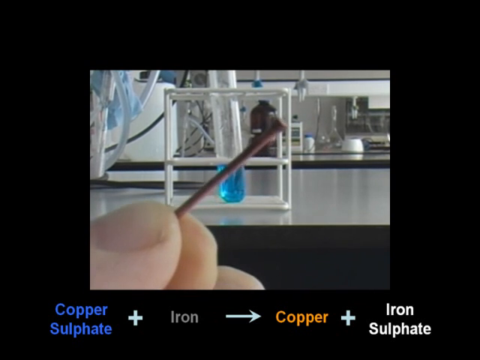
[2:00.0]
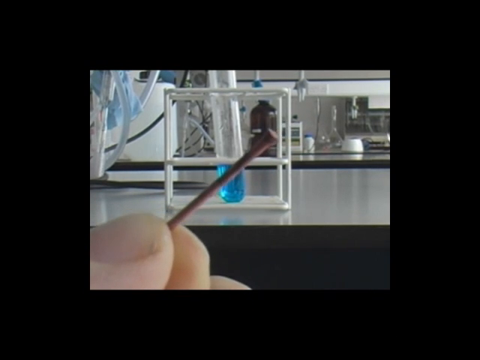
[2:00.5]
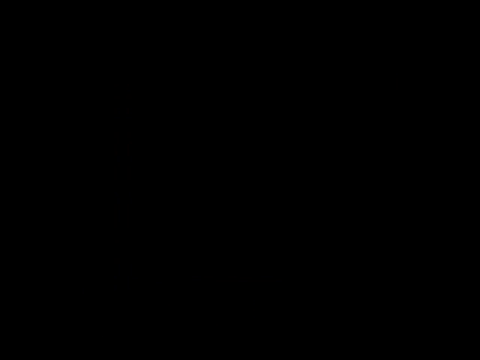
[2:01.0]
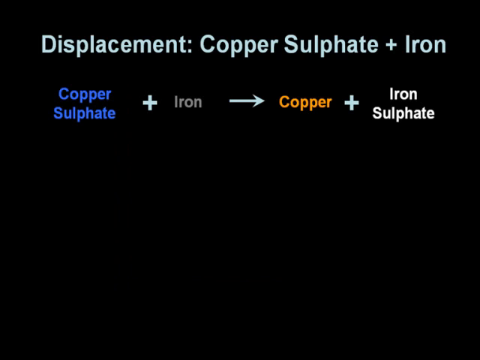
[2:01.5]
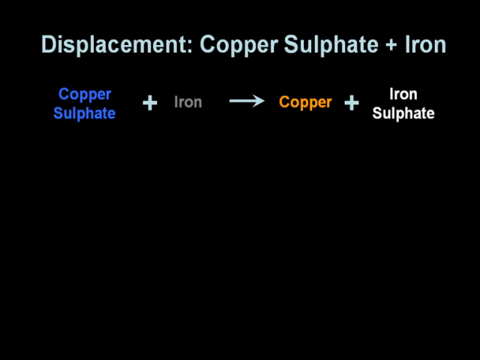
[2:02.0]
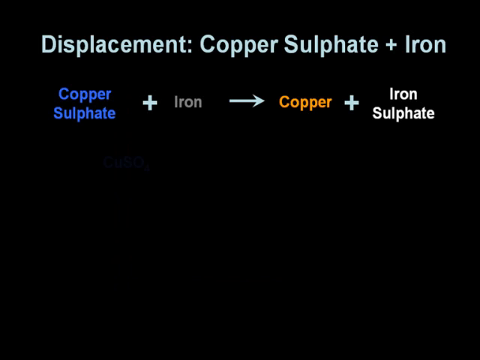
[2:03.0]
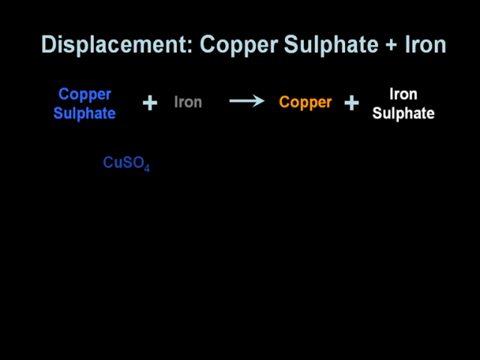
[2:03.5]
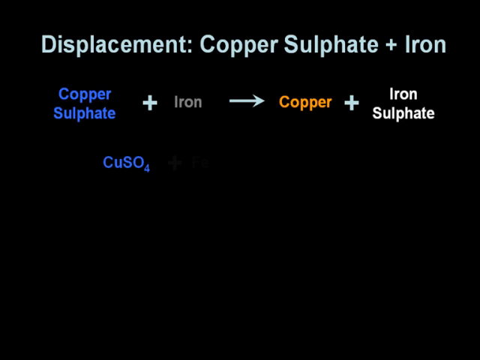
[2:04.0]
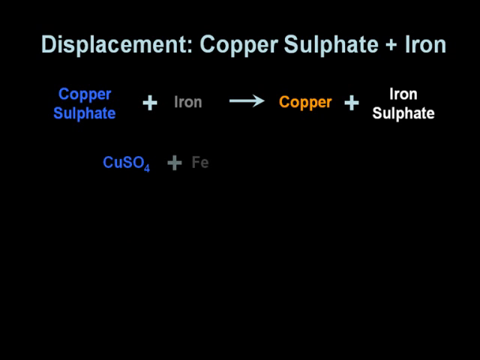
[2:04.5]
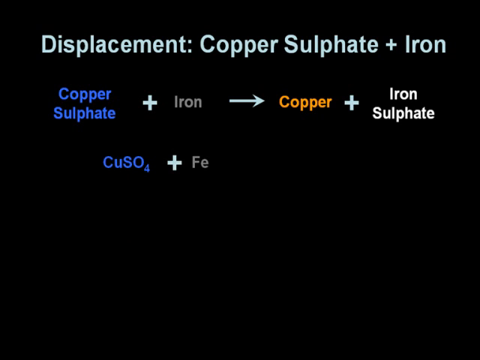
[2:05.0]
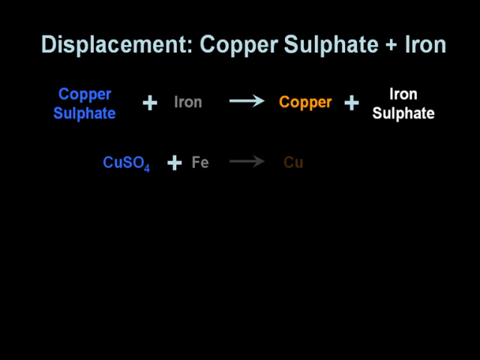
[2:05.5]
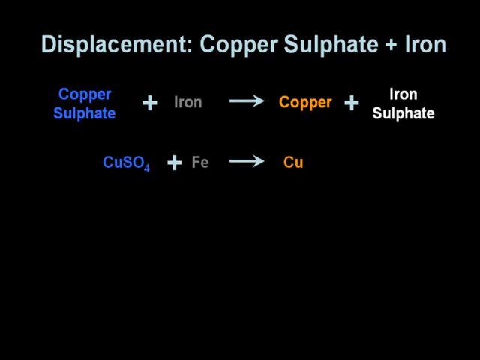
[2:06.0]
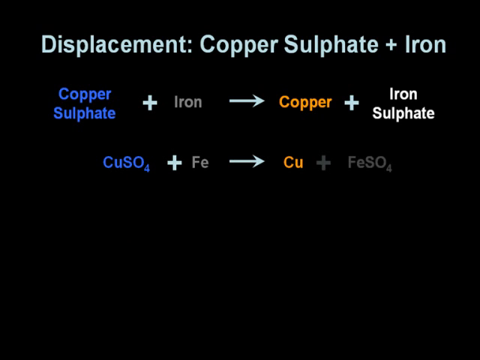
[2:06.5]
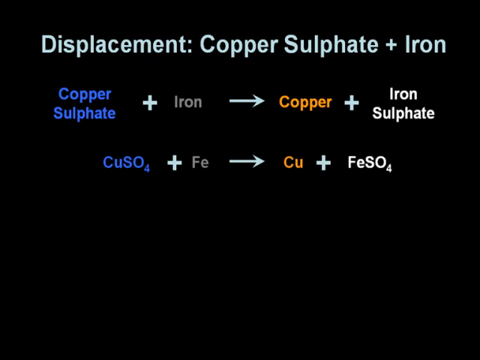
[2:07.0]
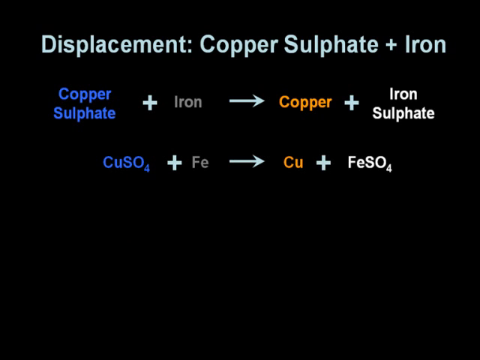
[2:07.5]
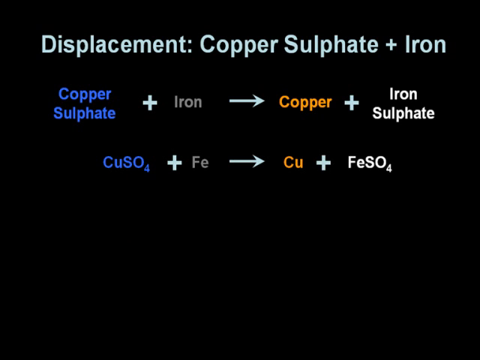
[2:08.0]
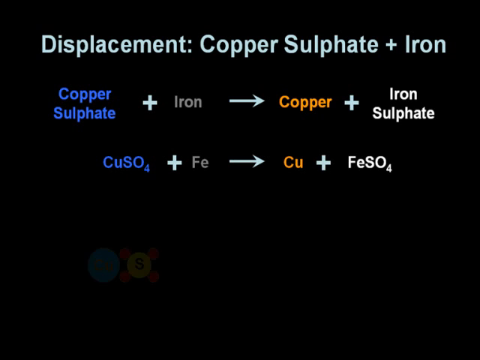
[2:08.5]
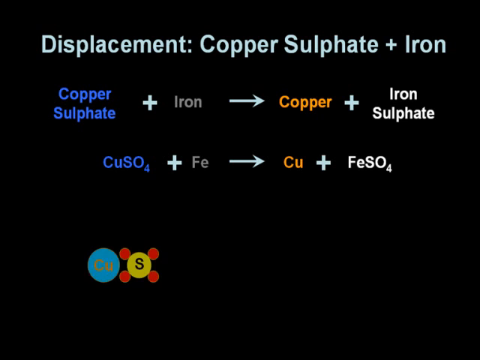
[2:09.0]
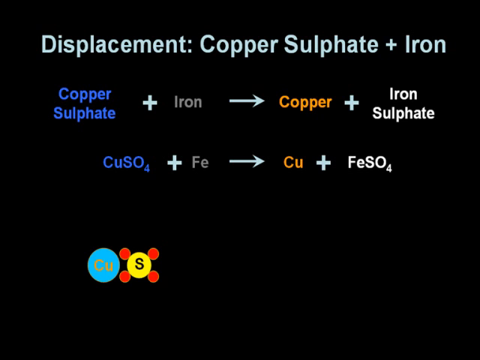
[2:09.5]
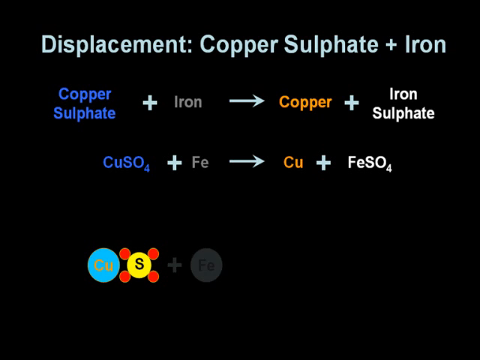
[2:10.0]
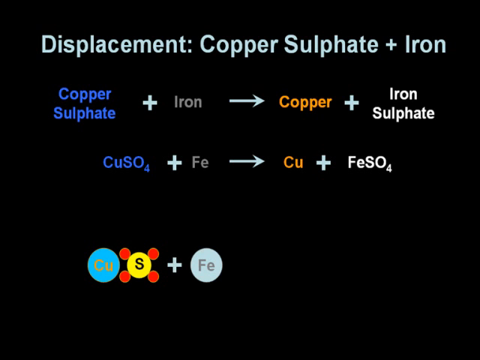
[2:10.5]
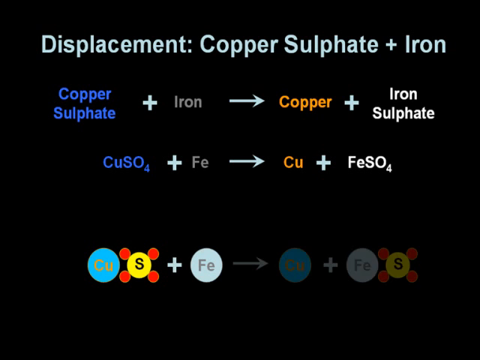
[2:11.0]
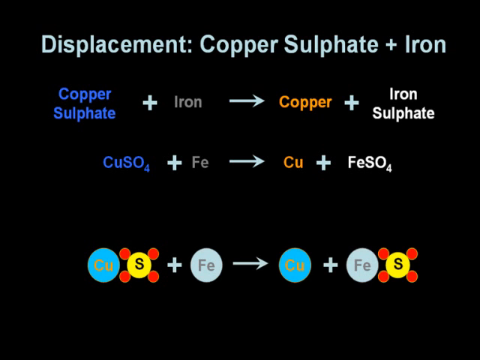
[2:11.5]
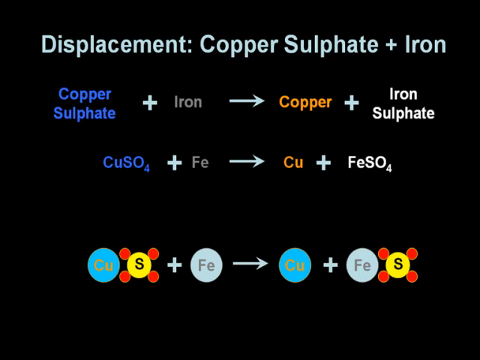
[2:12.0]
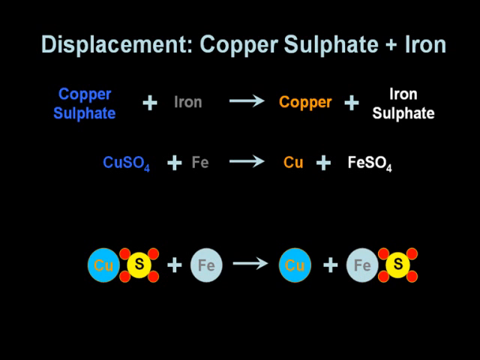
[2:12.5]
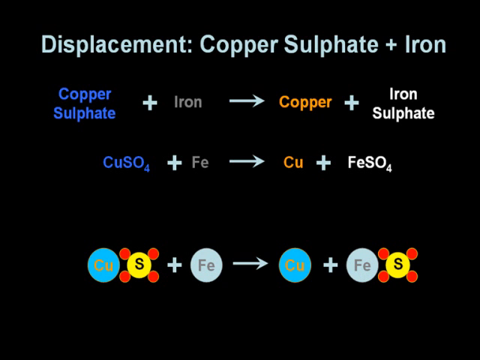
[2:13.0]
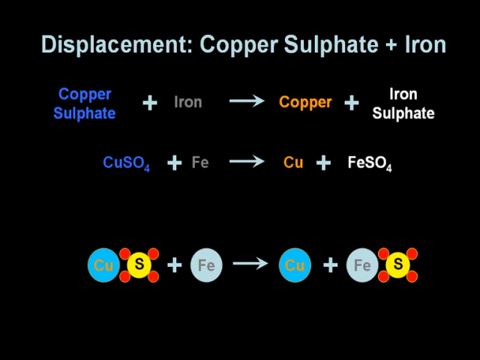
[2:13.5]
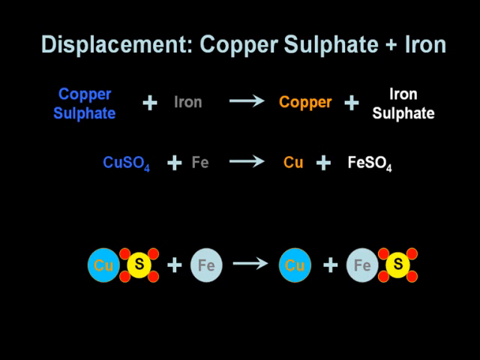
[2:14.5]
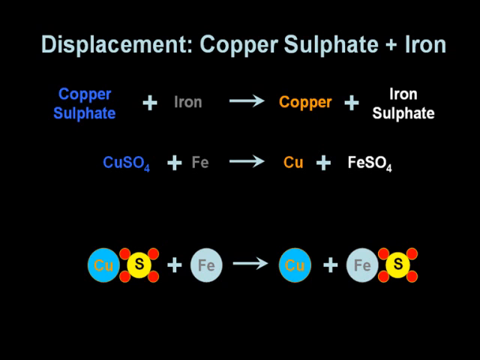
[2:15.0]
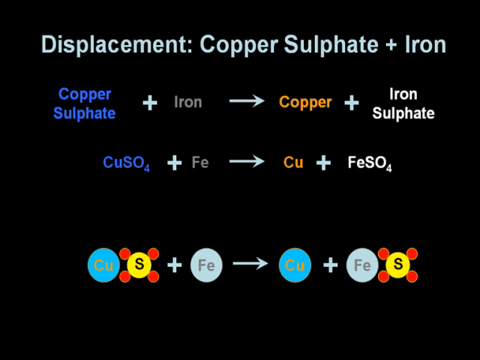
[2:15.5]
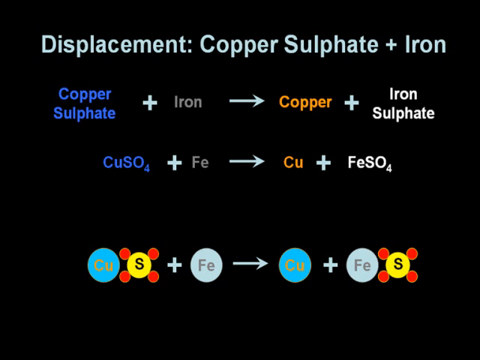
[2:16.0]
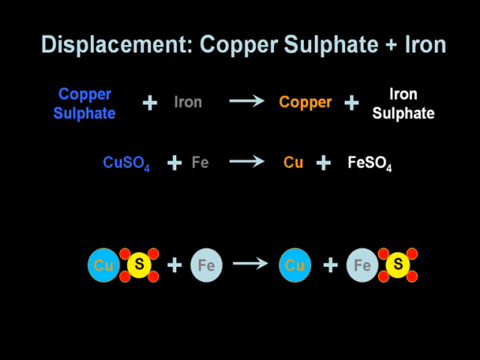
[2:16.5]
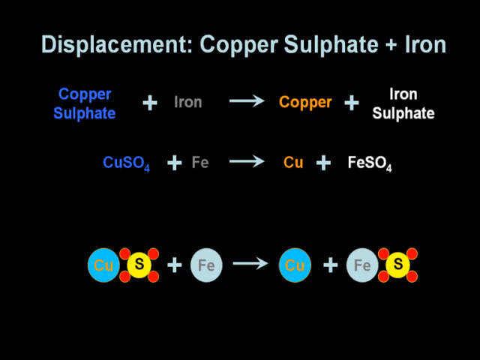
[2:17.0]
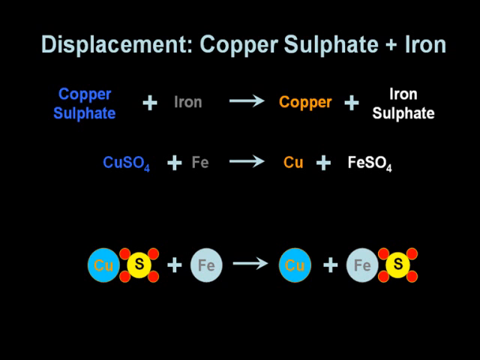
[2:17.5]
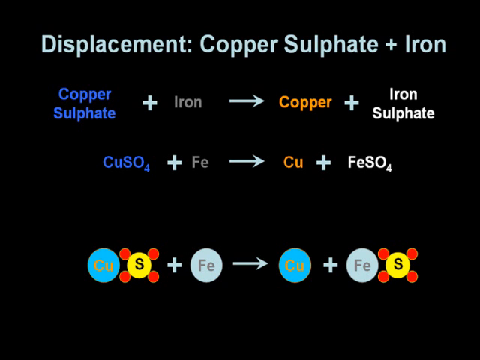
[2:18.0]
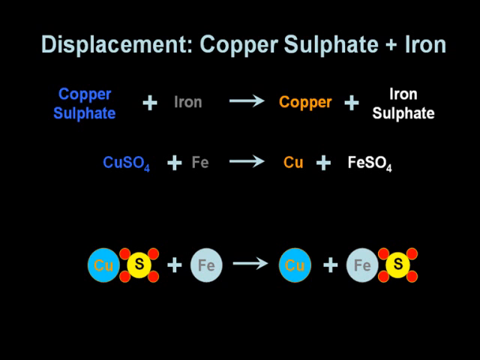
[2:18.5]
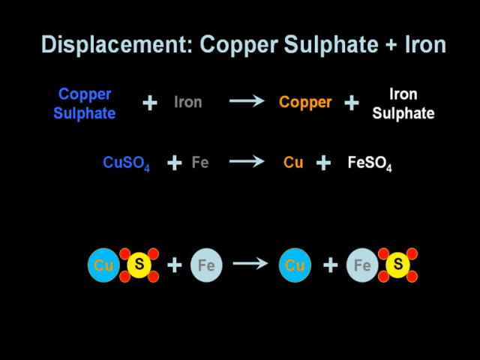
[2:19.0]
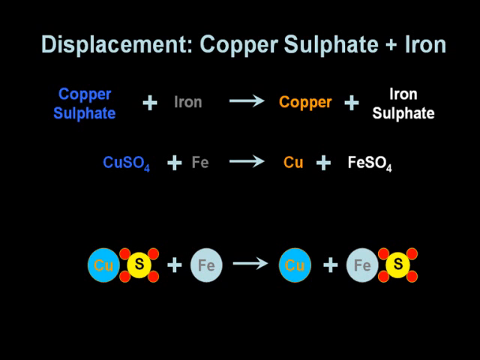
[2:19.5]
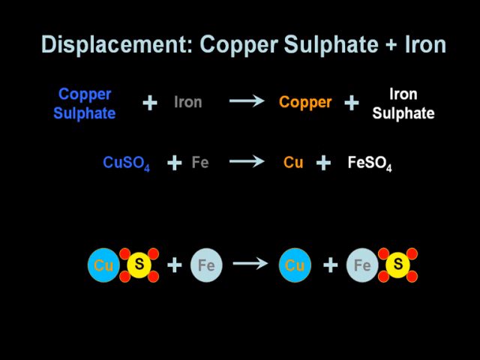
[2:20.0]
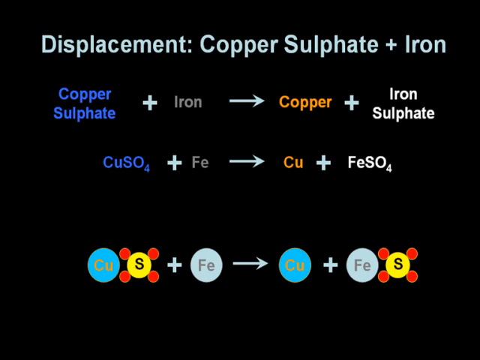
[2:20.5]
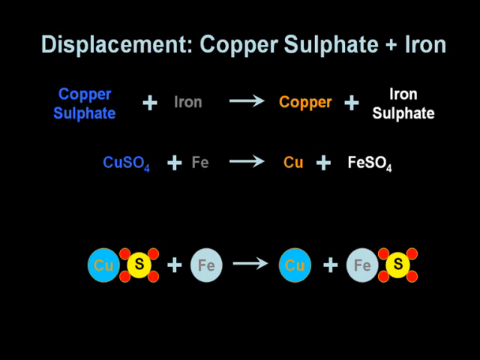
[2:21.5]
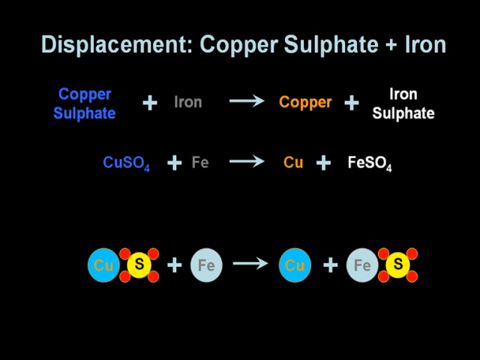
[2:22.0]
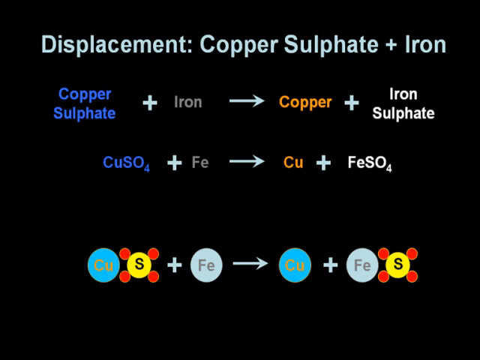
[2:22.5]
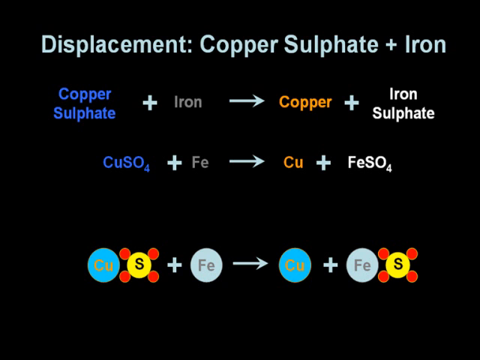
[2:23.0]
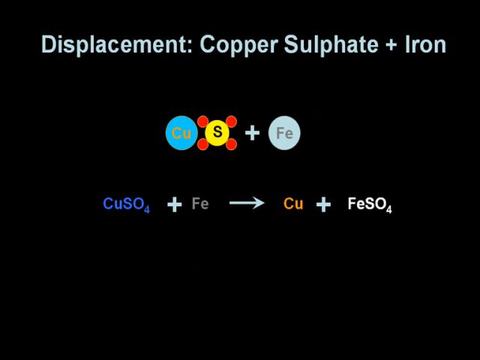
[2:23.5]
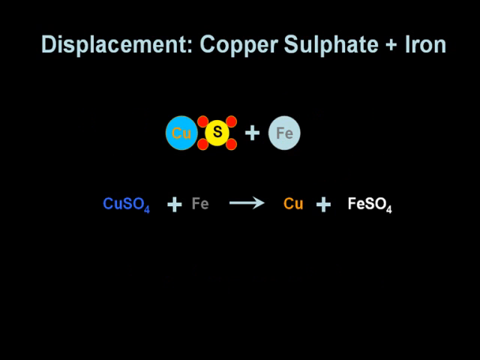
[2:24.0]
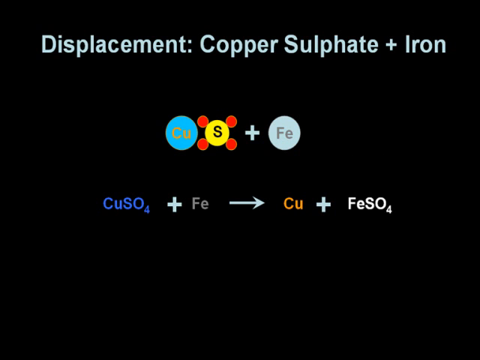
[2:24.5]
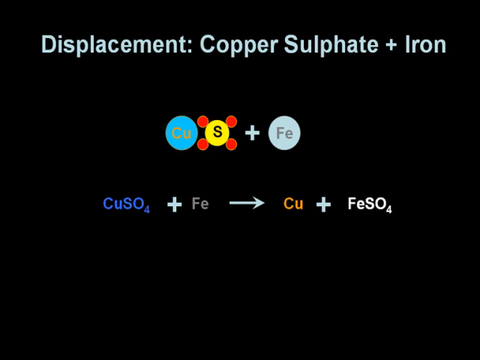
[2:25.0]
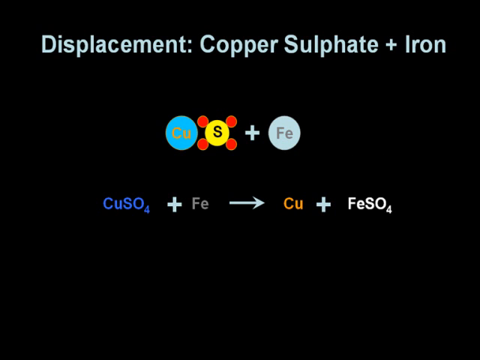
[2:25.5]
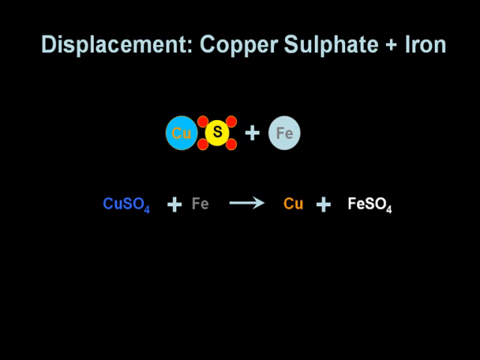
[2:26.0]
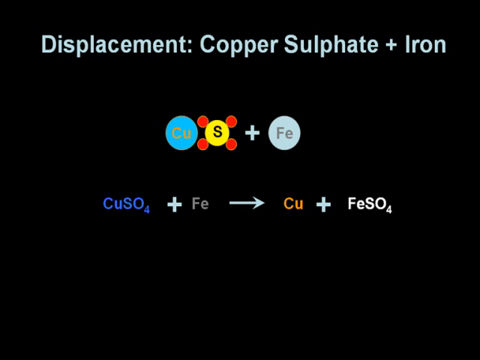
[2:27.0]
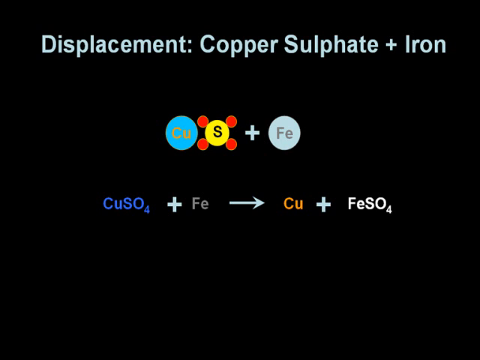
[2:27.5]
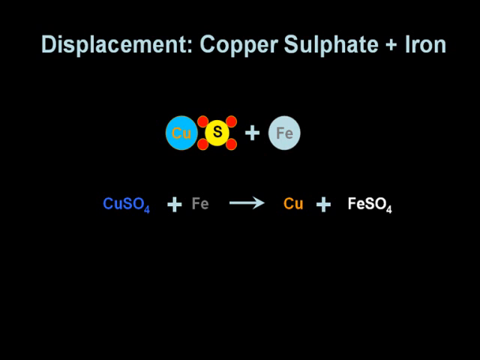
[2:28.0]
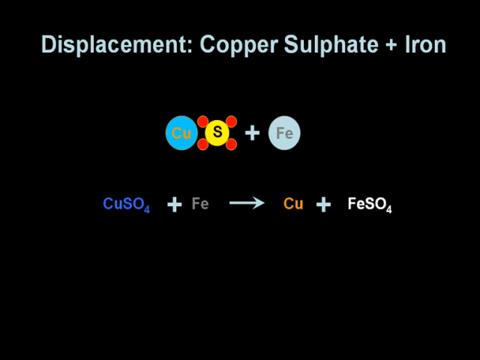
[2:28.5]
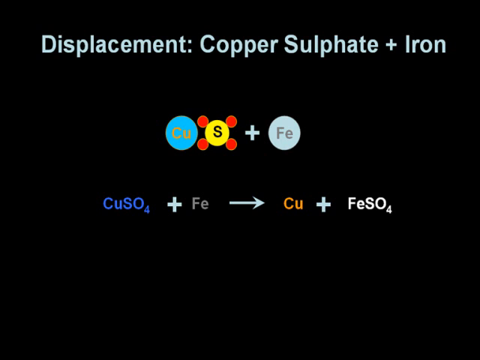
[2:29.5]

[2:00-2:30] A black screen shows "displacement: copper sulfate + iron" in a very light mint color across the top. Underneath the title, the reaction is laid out in words: "copper sulfate" in blue, a plus sign, "iron" in gray, an arrow to "copper" in orange, a plus sign, and "iron sulfate" in white. Underneath that, the same items appear as periodic table symbols in matching colors: "CUSO4 + FE → CU + FESO4". At the bottom of the page, circle diagrams with the periodic symbol labeled on each circle, along with plus signs and arrows, show the reaction in diagram form. The slide then changes to a diagram of CU in a blue circle, S in a yellow circle surrounded by four reddish-orange balls, plus FE in a circle. Below that, in blue, it says "CUSO4 + FE → CU + FESO4".